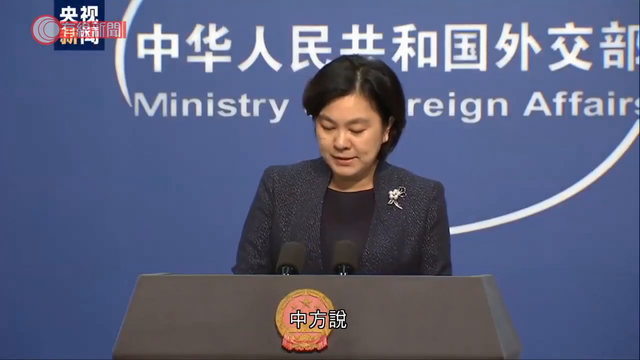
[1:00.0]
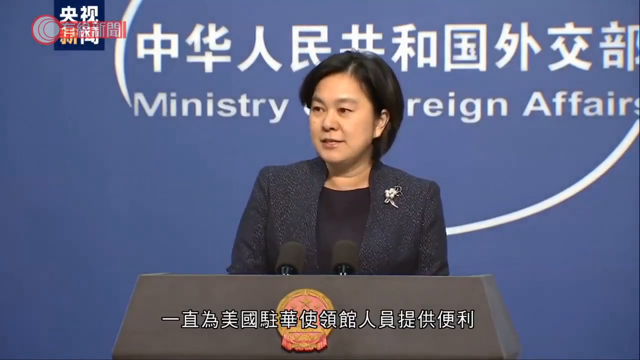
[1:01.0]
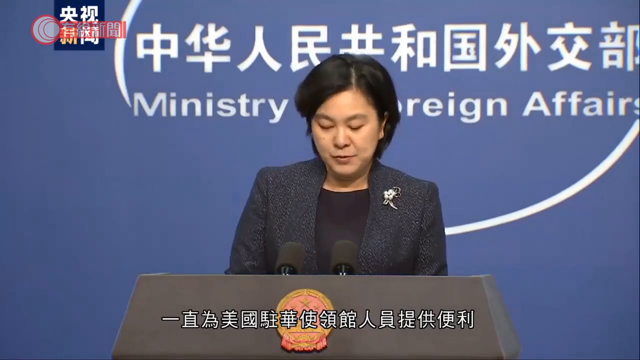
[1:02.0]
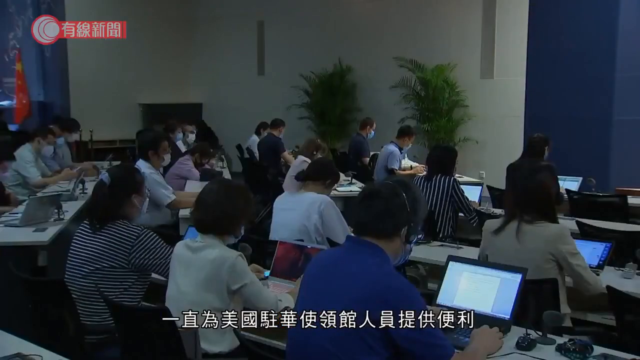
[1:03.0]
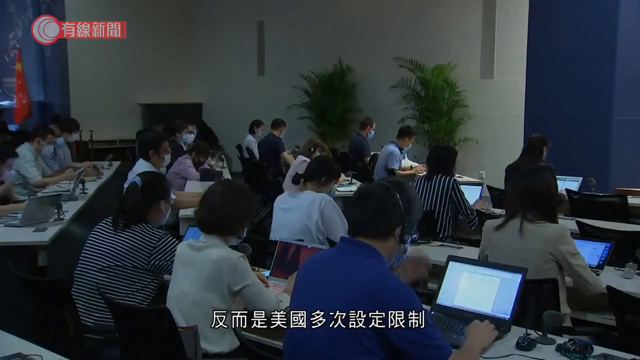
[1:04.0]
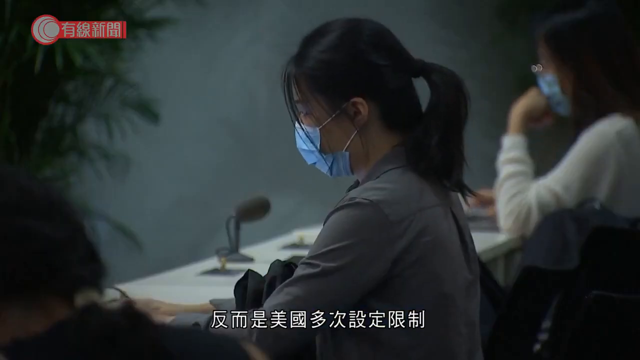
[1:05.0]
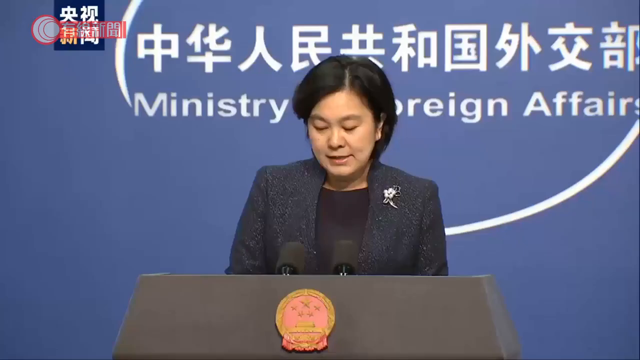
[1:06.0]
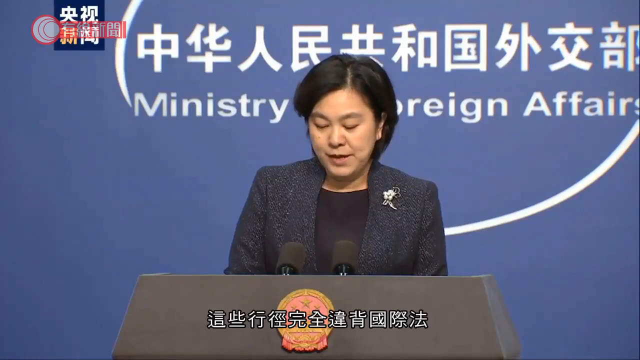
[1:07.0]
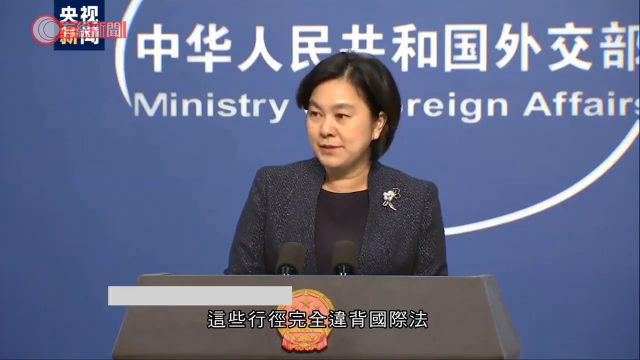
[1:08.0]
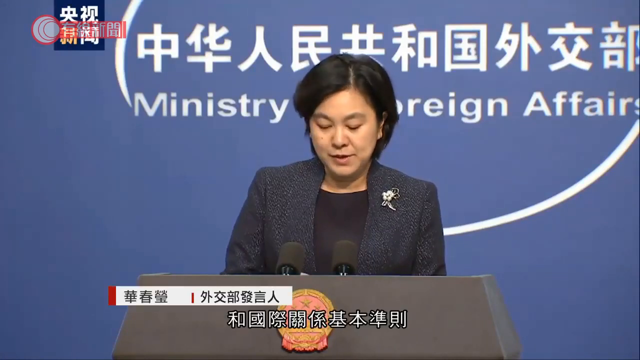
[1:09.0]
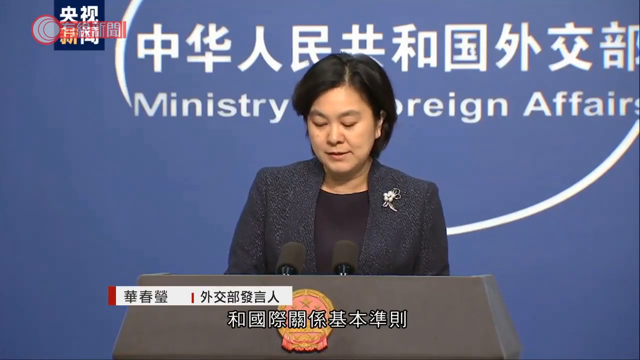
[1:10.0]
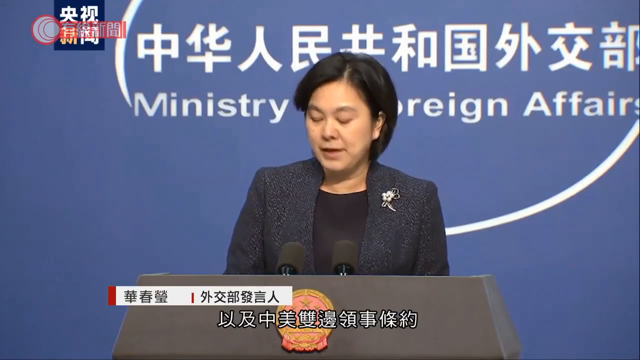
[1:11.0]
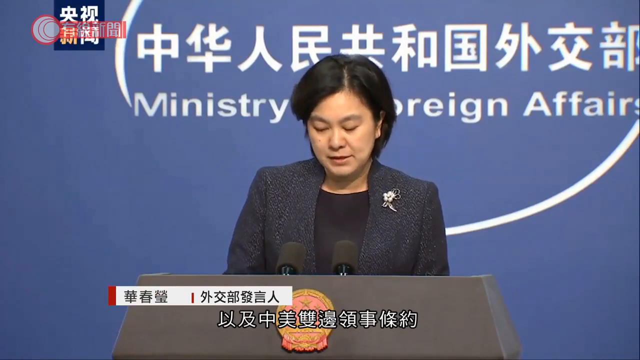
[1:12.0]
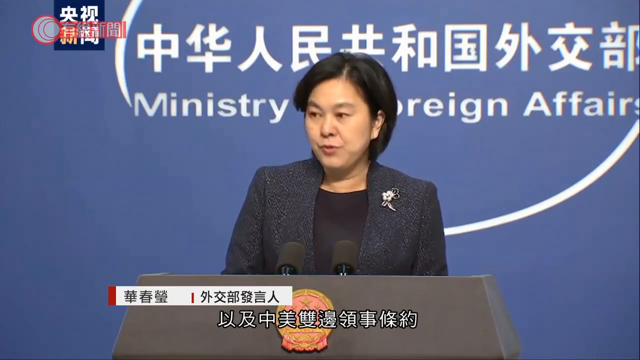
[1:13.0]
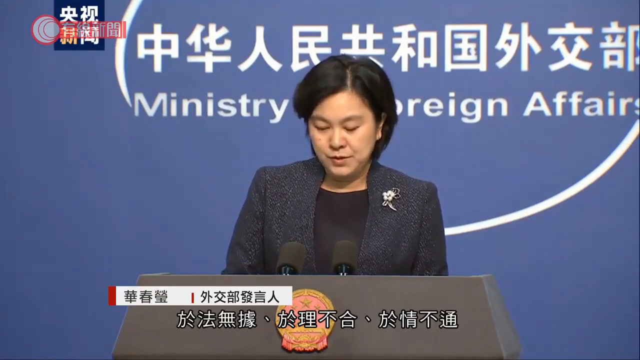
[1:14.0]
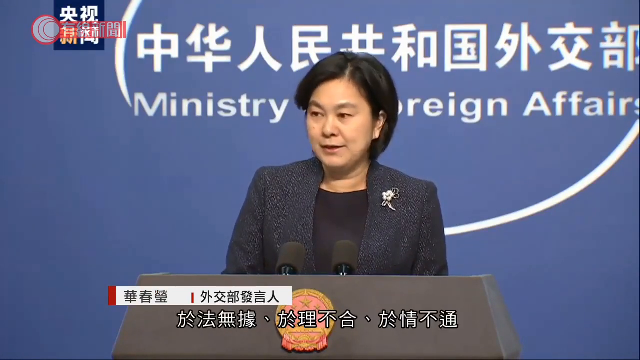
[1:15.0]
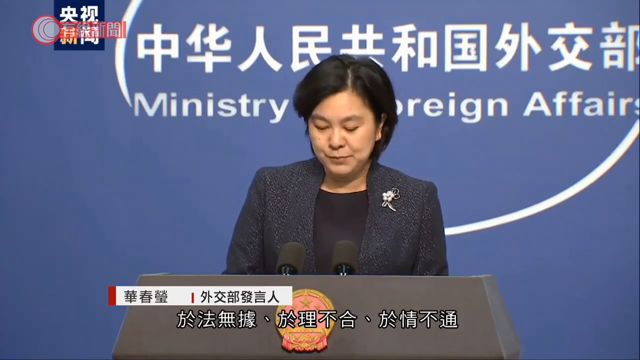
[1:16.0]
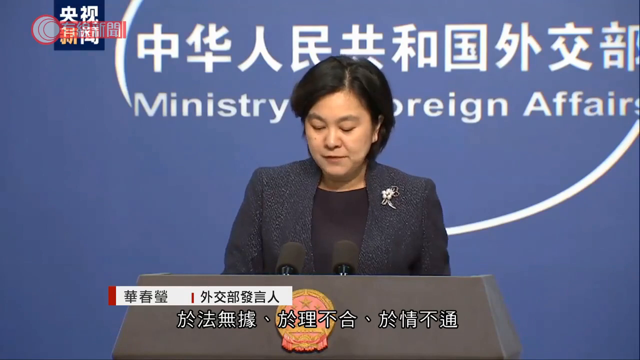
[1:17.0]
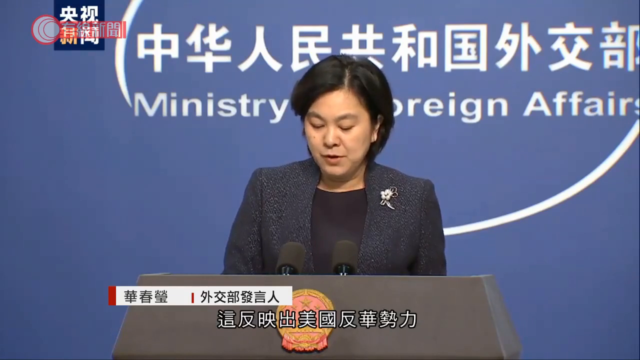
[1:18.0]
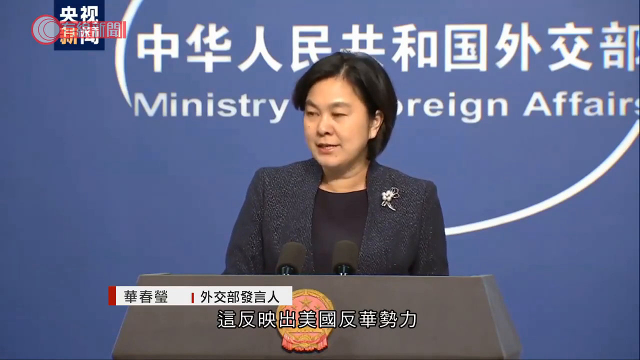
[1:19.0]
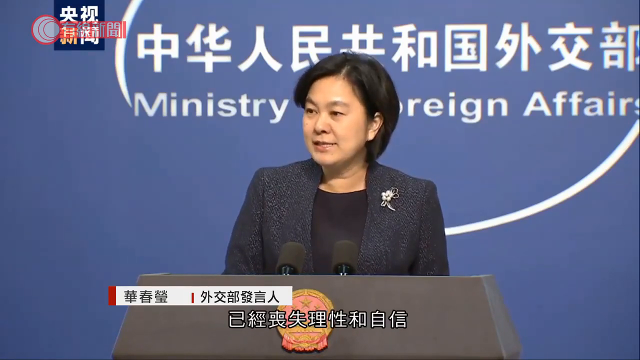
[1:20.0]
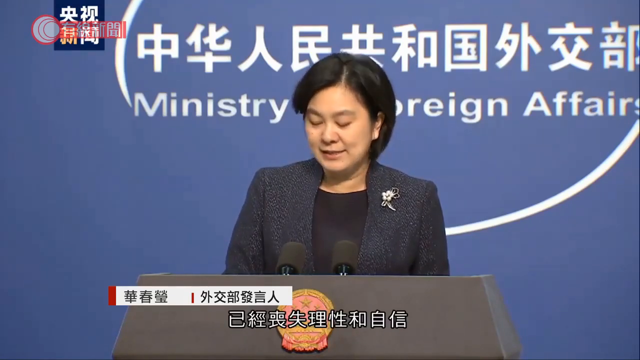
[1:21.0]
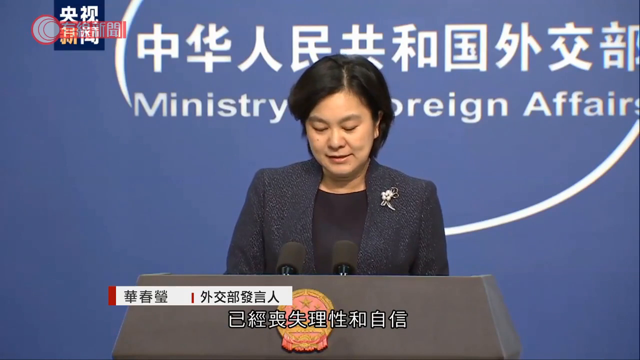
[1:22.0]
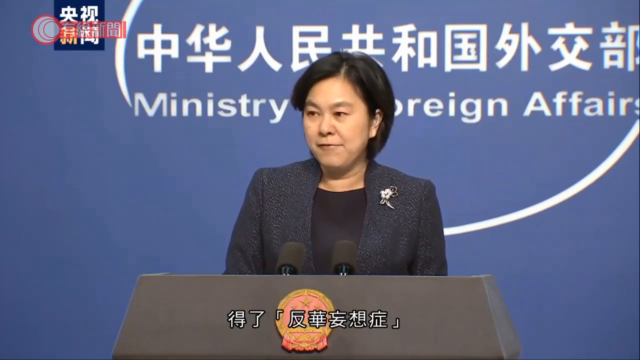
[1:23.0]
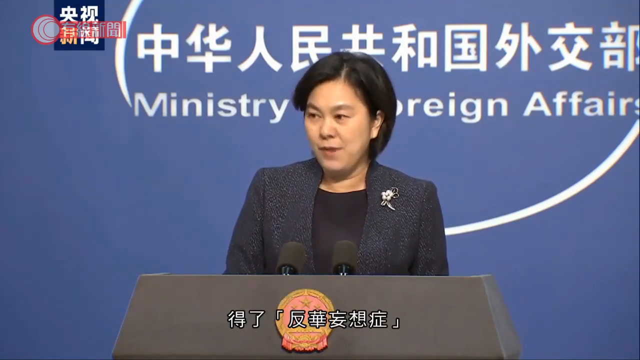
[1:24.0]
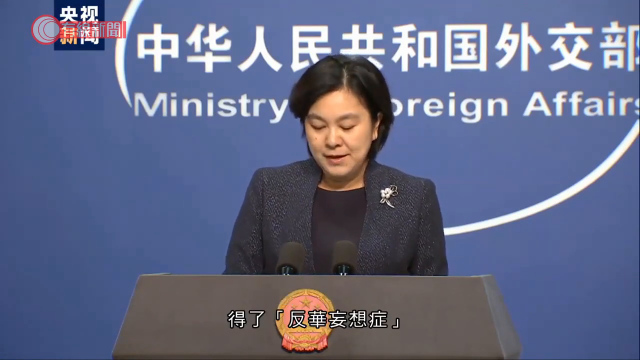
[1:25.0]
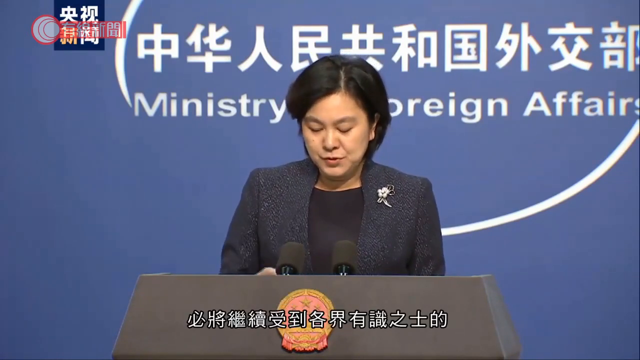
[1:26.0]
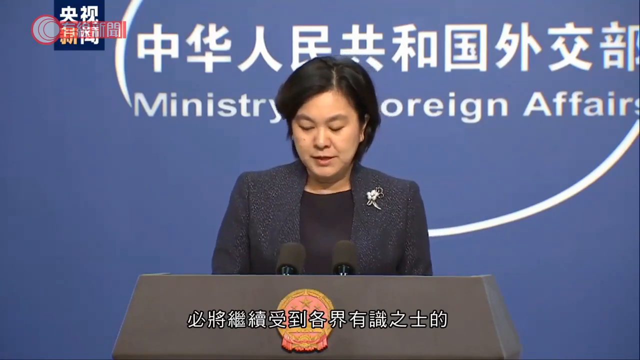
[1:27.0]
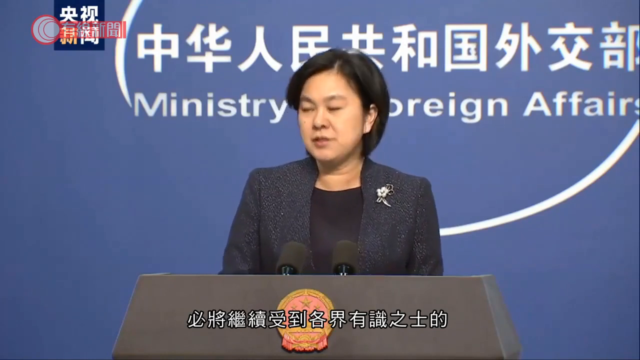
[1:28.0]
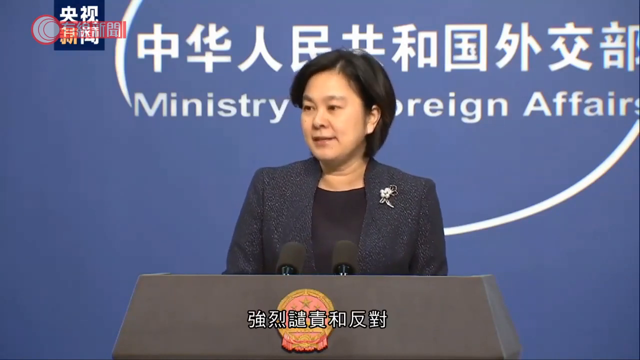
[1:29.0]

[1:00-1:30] The woman speaking at the podium has black hair and wears a gray blouse and a gray sweater or gray jacket, with a pin on her lapel that looks like a flower. The scene then shows what appears to be a classroom: the students wear masks and are all working on laptops, all facing the same direction, with a continuous long desk in front of them that the computers are sitting on. A red flag, possibly a Chinese flag, is on the far left-hand side of the image, and there are two large plants at the front of the room.